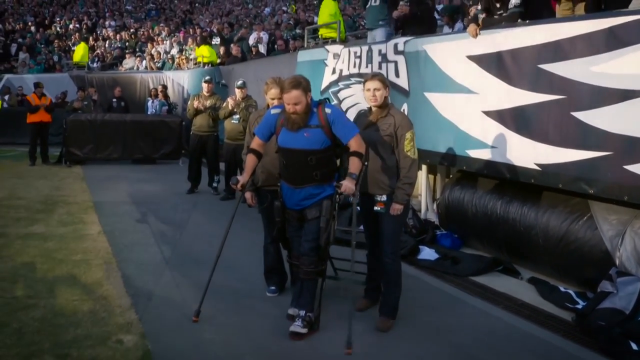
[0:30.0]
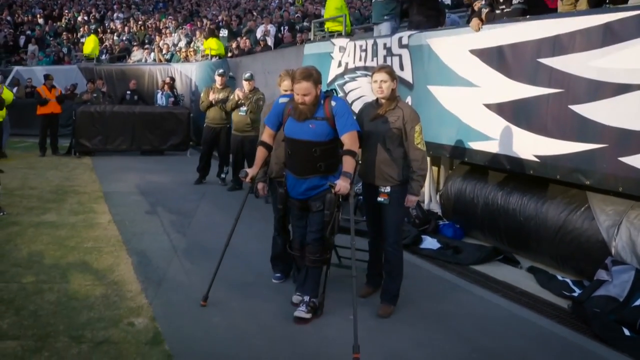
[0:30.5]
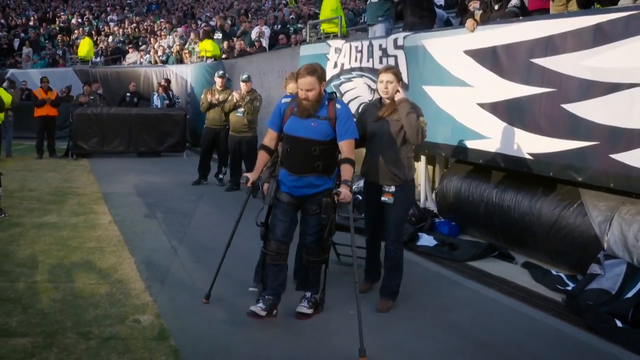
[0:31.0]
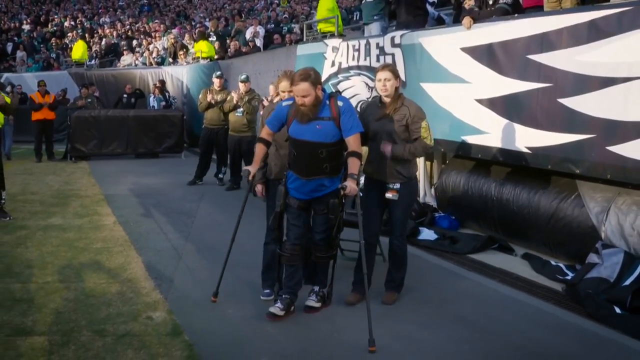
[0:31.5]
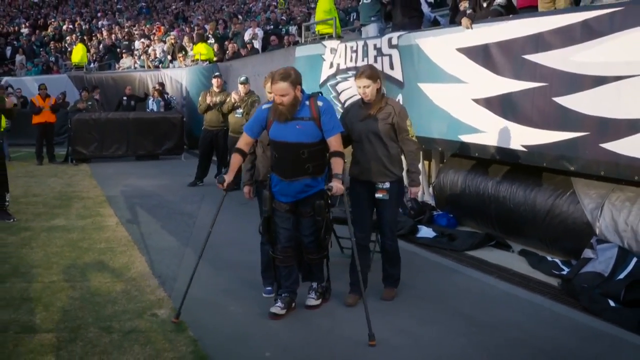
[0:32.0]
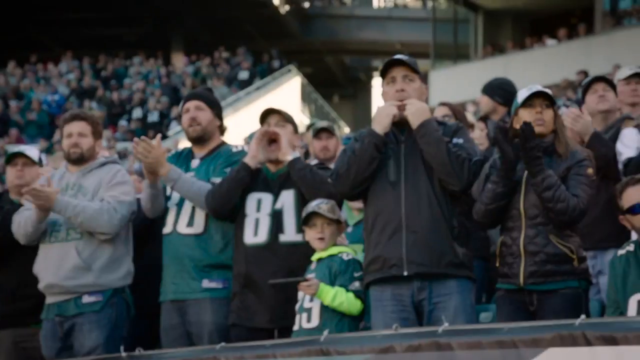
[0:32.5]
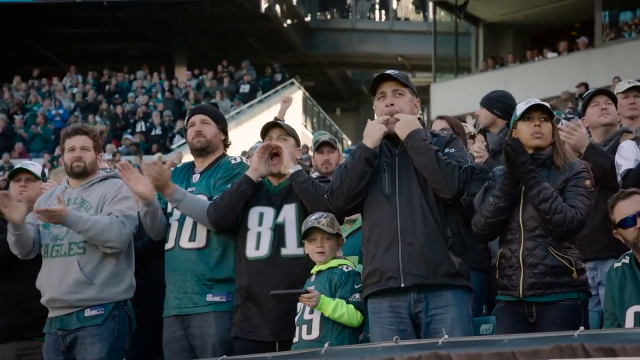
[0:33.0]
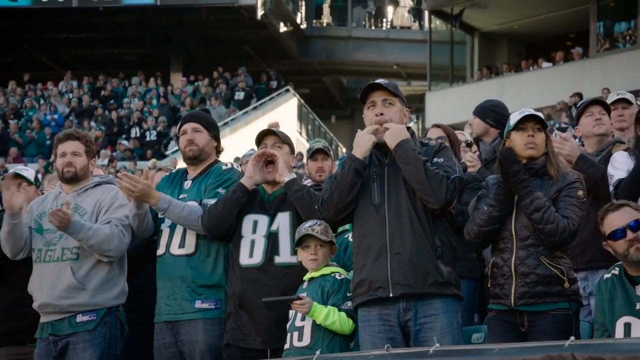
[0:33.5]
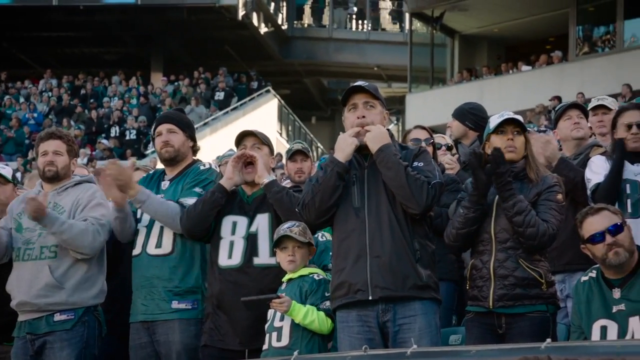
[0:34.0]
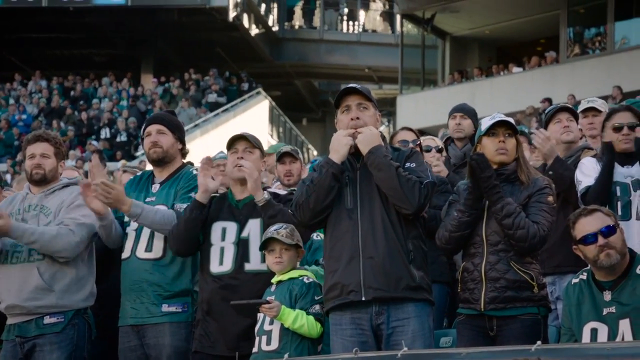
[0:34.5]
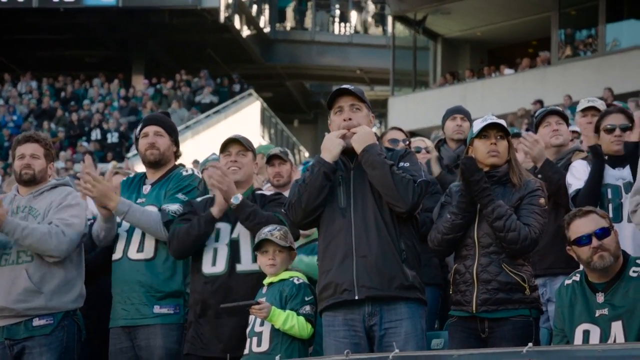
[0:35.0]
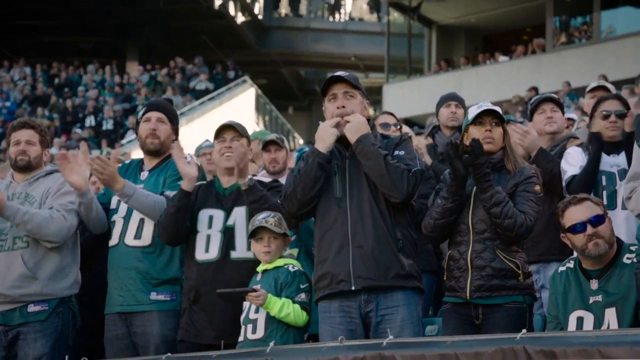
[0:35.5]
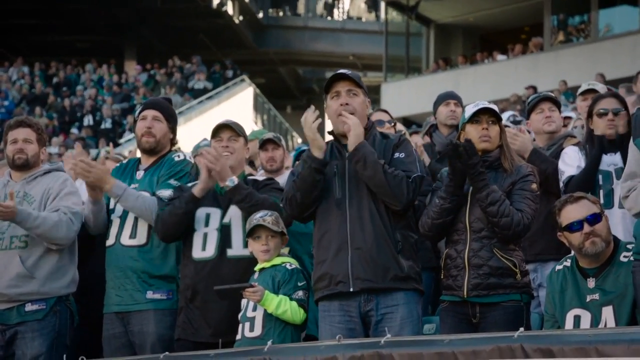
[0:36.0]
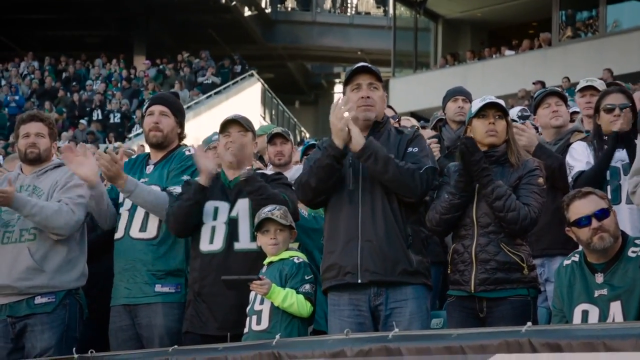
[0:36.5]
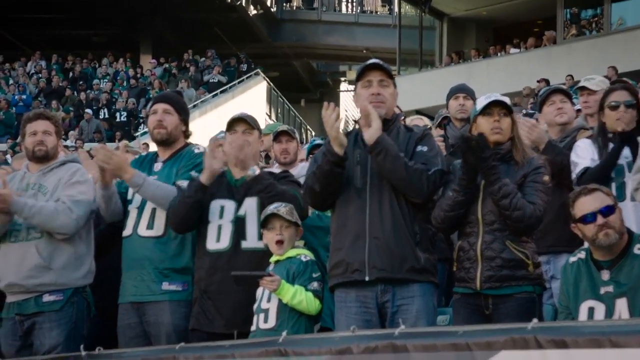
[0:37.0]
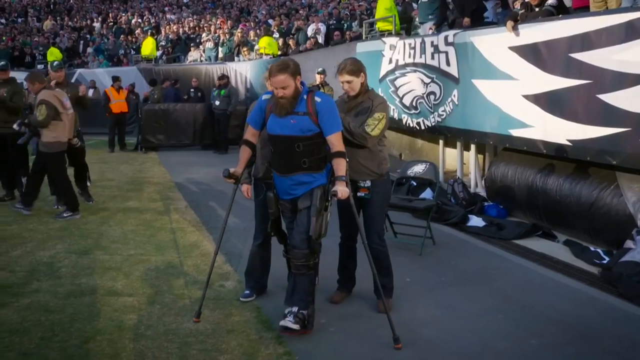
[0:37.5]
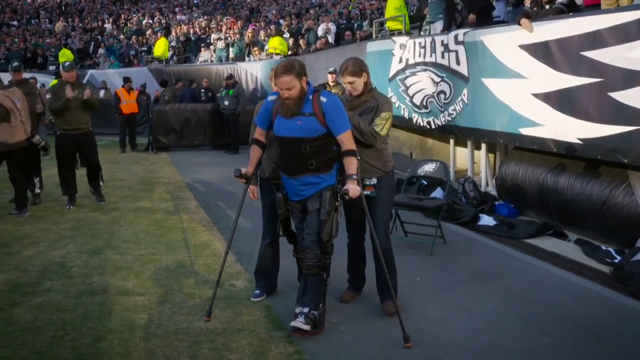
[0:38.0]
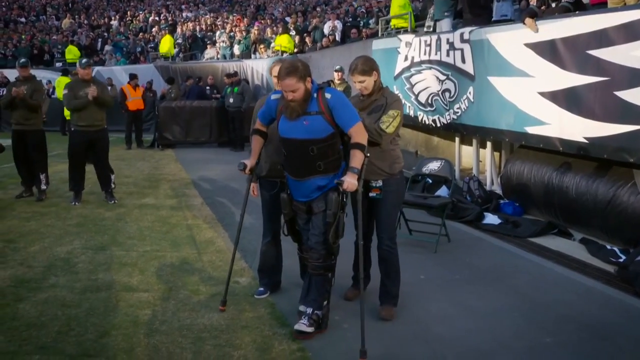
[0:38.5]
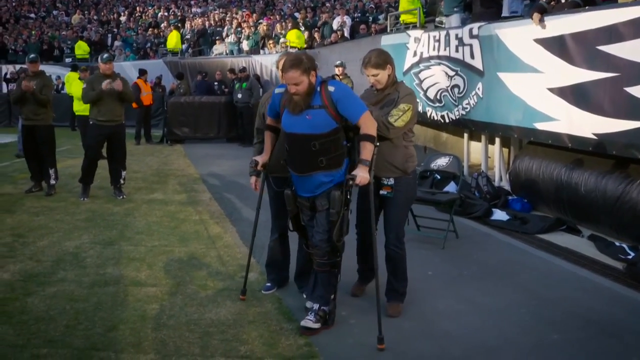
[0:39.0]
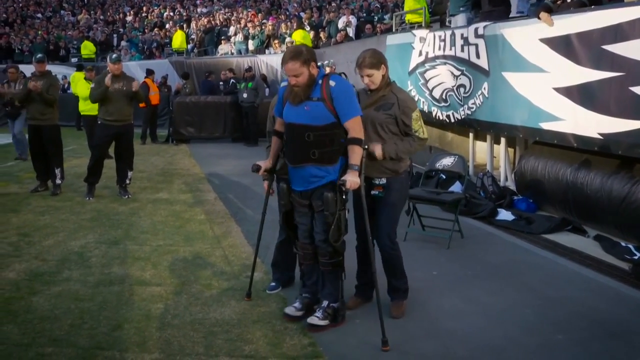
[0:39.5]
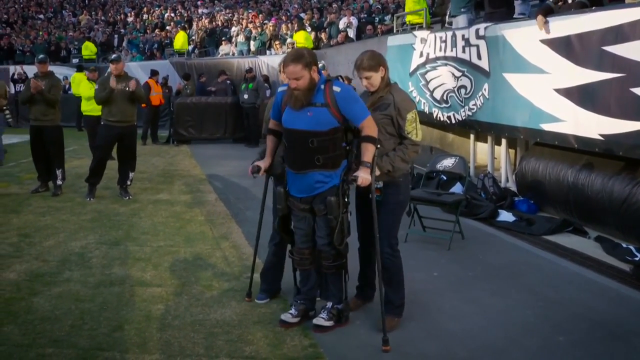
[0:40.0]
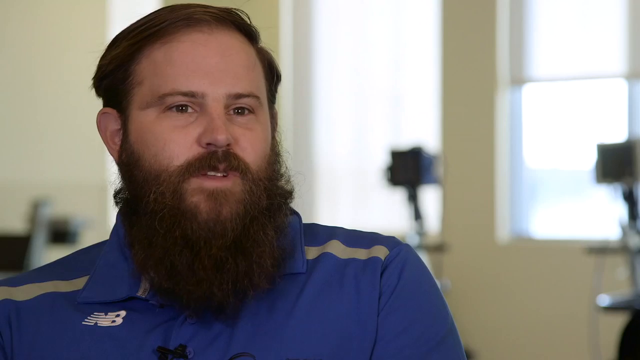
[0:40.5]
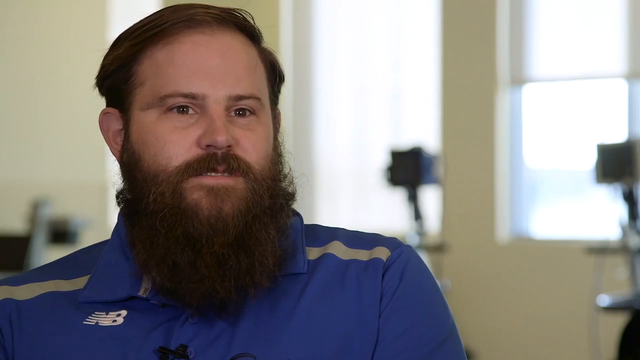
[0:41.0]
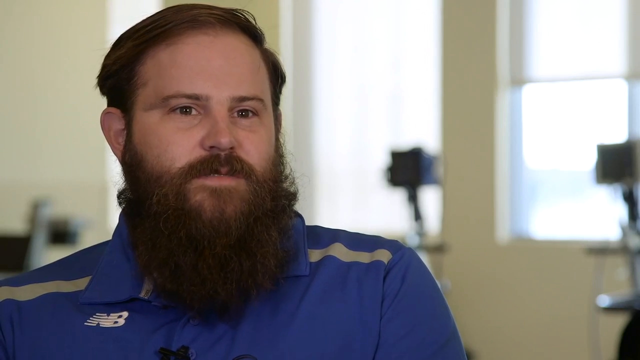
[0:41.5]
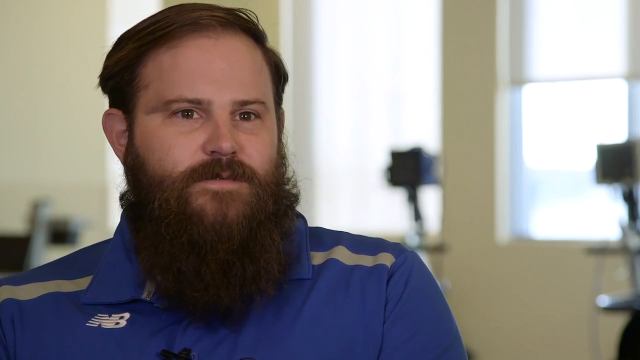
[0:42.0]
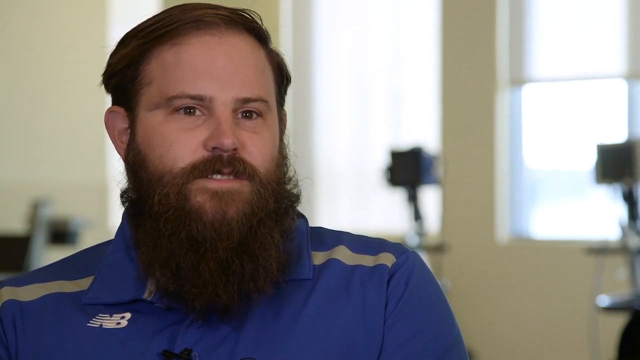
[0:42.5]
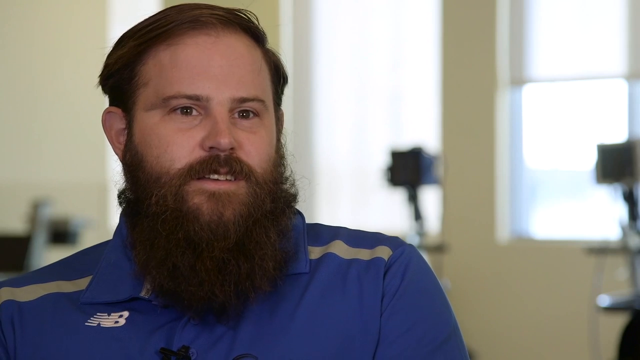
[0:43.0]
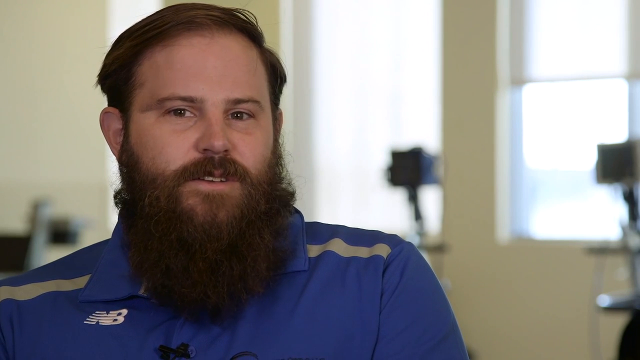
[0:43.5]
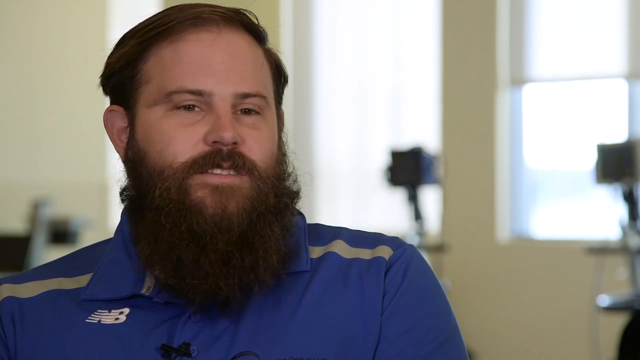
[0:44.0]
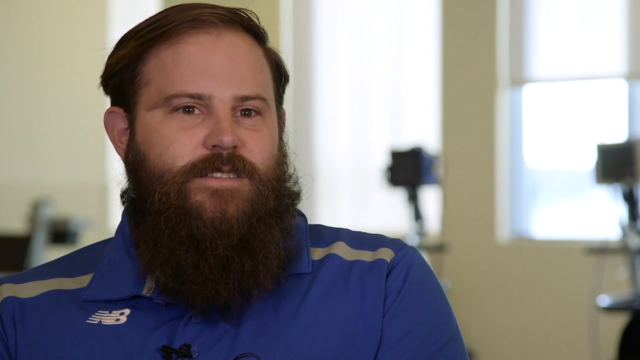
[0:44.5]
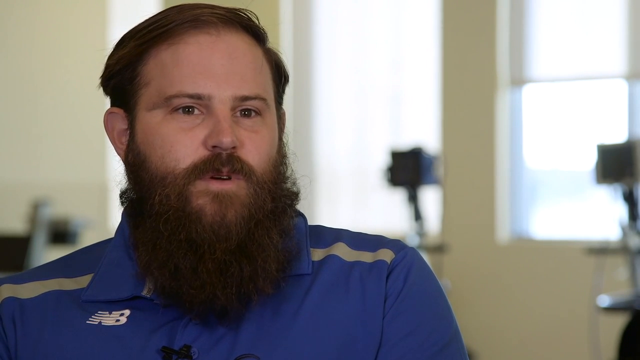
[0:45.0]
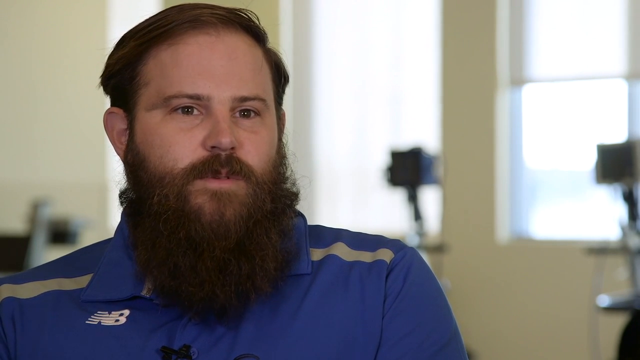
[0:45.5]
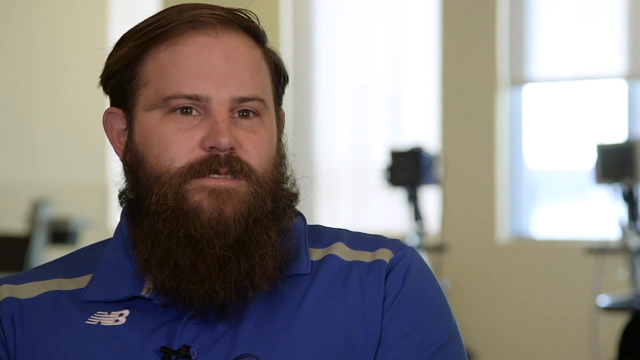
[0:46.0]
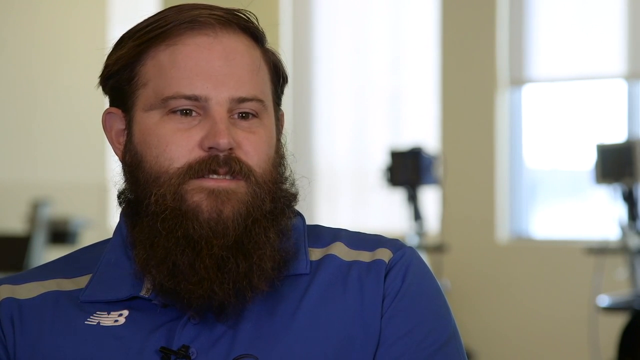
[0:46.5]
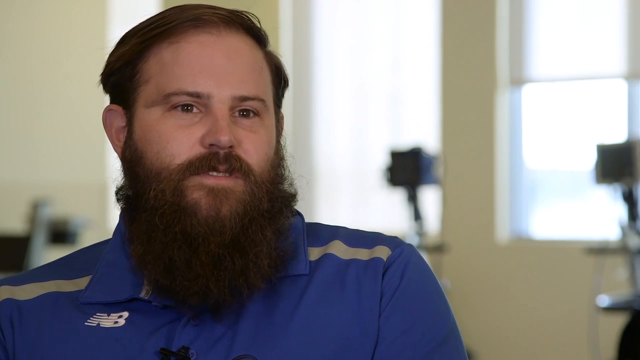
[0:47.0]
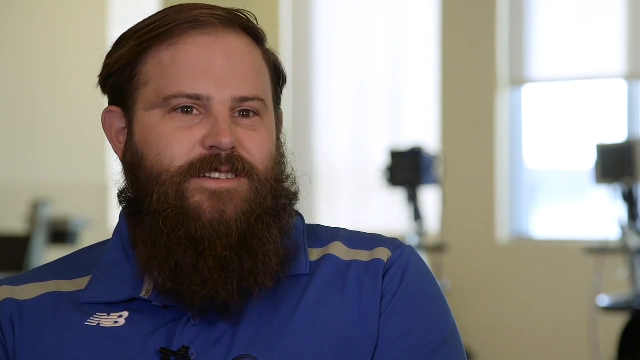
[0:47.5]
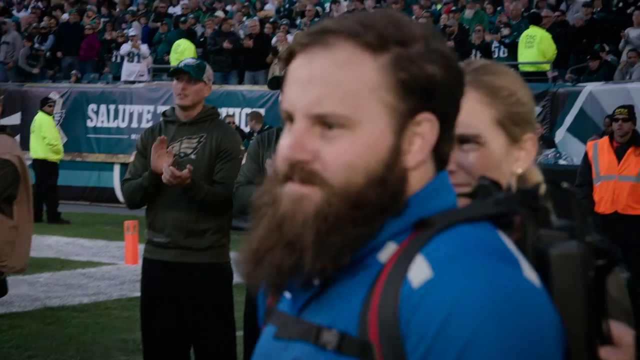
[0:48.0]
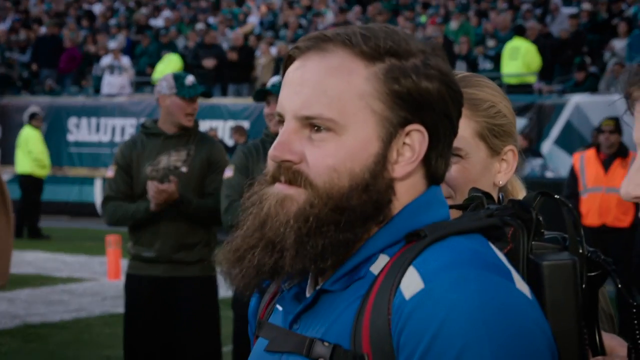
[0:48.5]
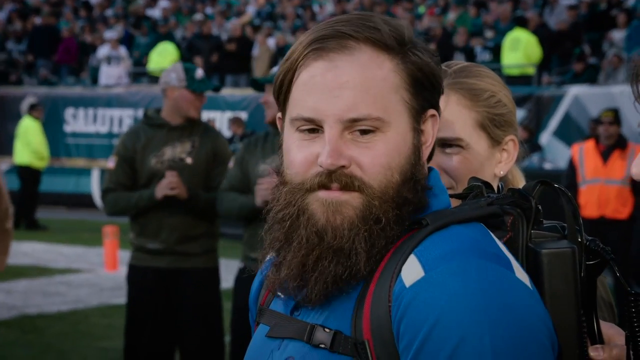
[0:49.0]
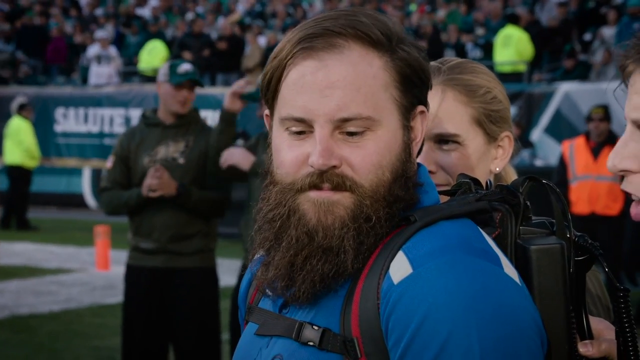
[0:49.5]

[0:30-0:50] The man, in blue jeans and with a brown bushy beard, slowly walks forward with the help of his two canes, putting his right foot forward and taking a step. The camera changes to a view of the crowd: one man in a black jacket has his fingers in his mouth, whistling, and three men next to him are all clapping. One man in a black jersey has a big smile on his face. The man in the blue shirt slowly begins to walk forward. The scene then changes to an interview with the man in the blue shirt in an empty room, with a few cameras behind him. He looks toward the camera and slightly off to his left, then slowly moves his head to his right as he continues to talk toward the camera. The video then changes back to him standing on the side of the football field.